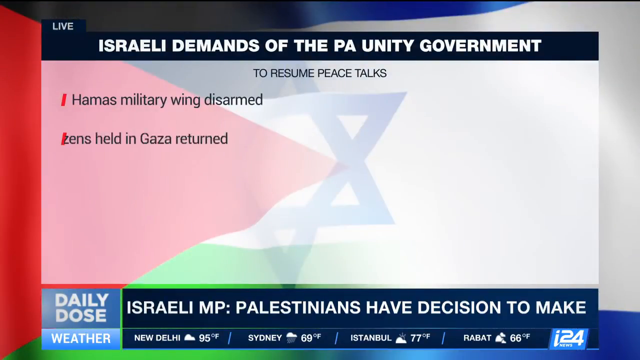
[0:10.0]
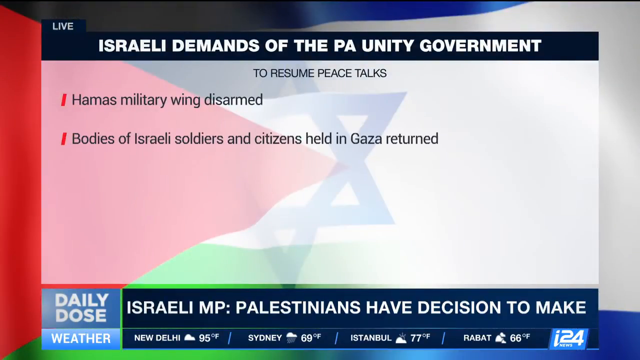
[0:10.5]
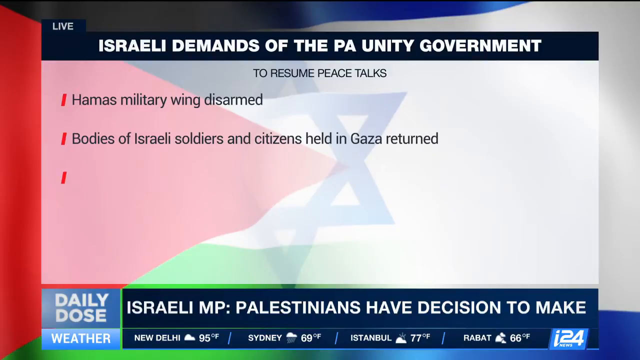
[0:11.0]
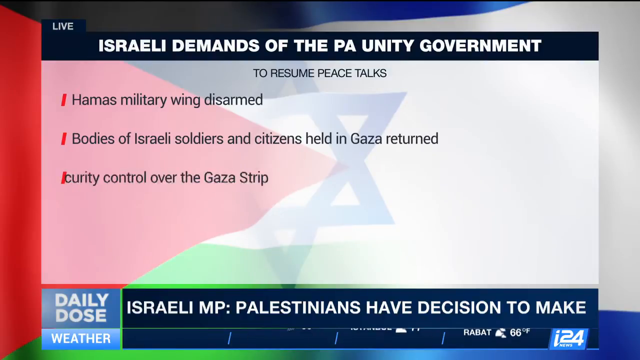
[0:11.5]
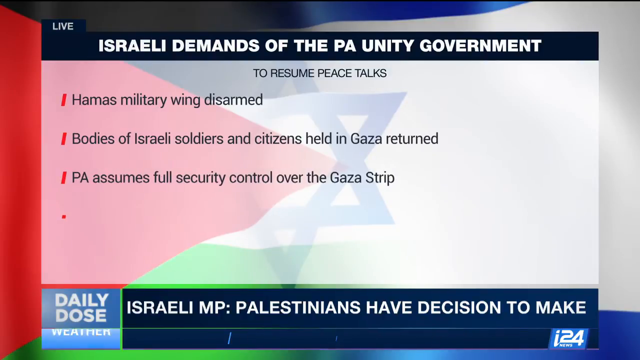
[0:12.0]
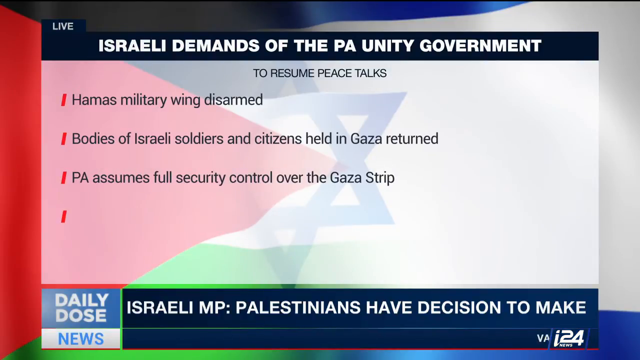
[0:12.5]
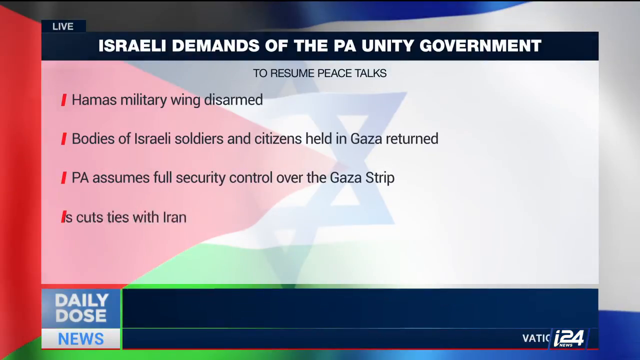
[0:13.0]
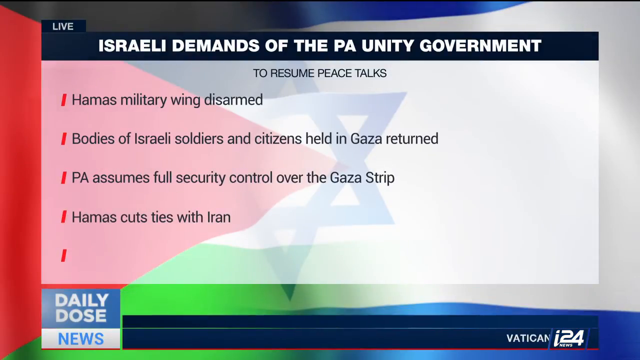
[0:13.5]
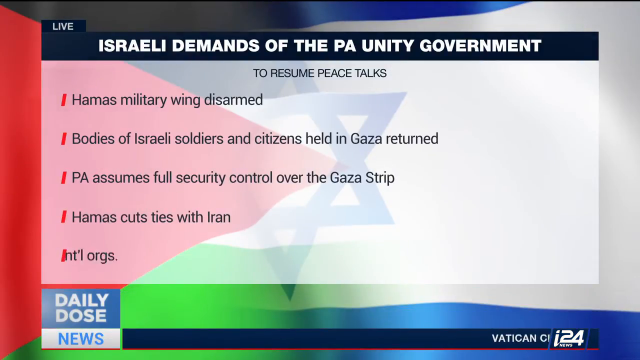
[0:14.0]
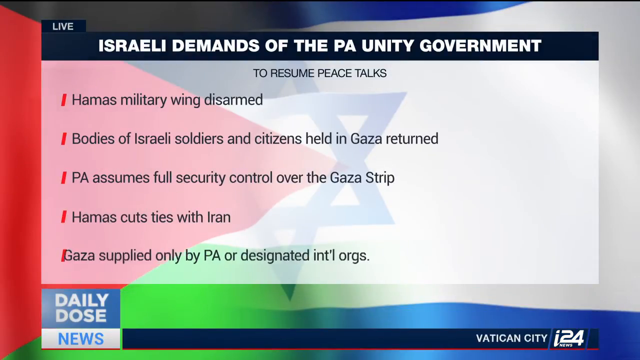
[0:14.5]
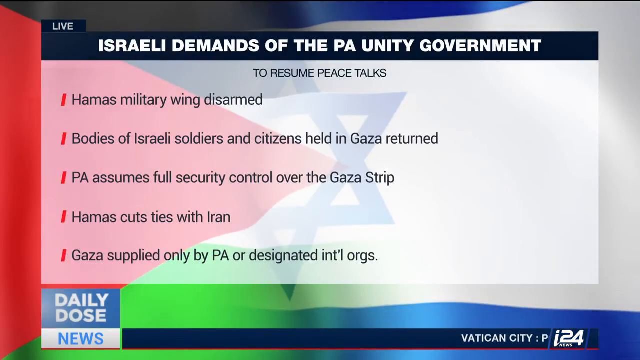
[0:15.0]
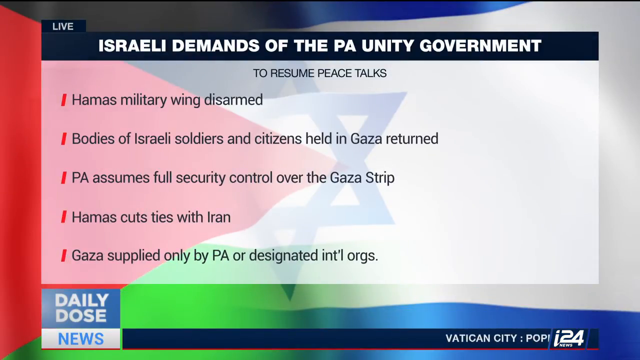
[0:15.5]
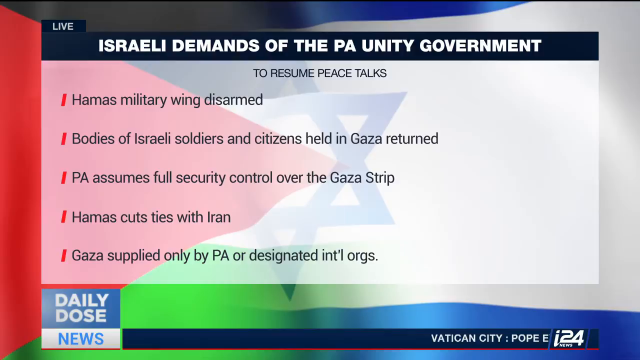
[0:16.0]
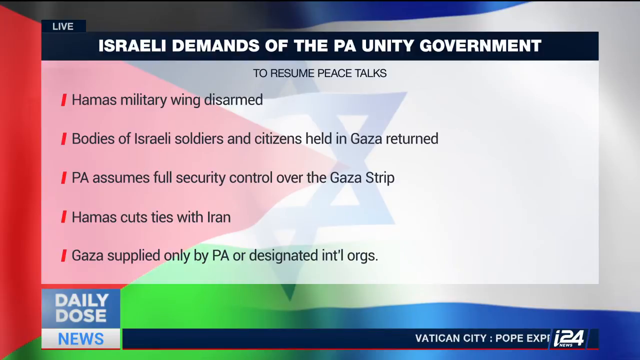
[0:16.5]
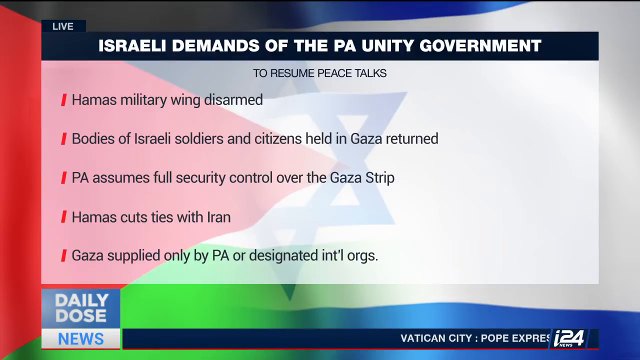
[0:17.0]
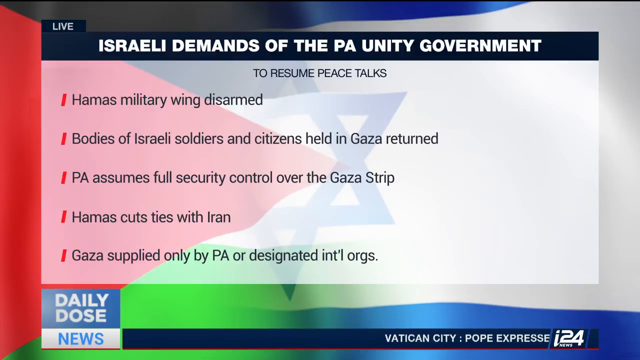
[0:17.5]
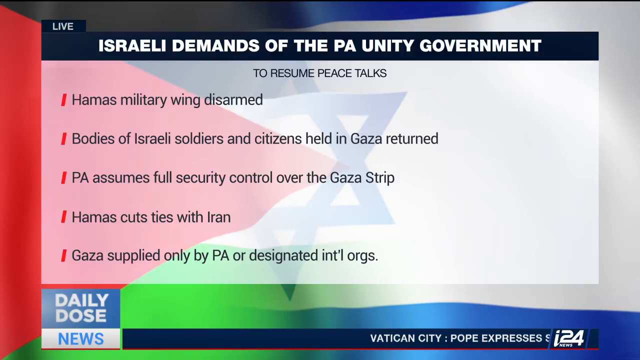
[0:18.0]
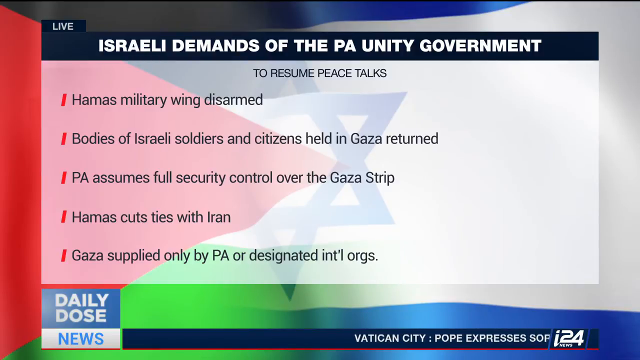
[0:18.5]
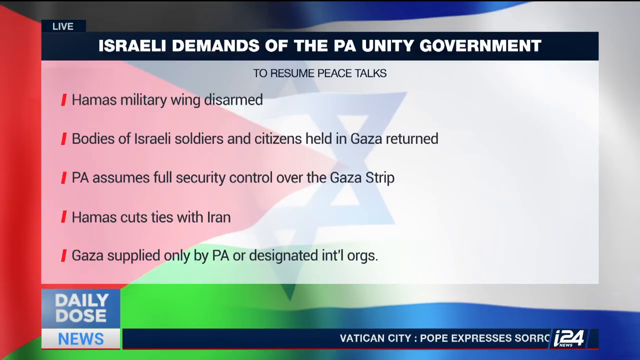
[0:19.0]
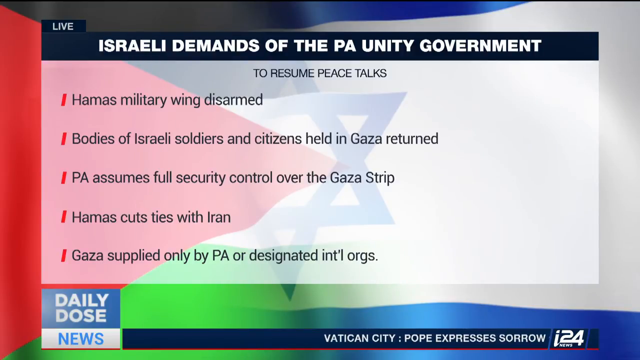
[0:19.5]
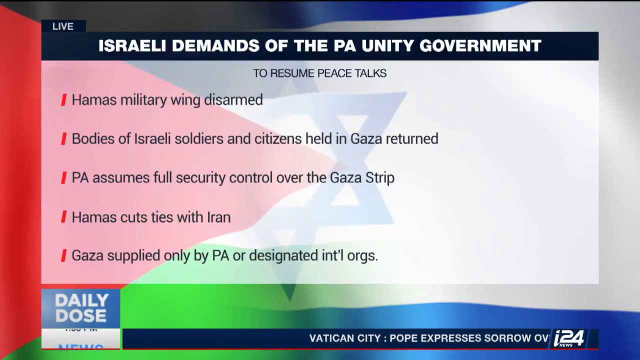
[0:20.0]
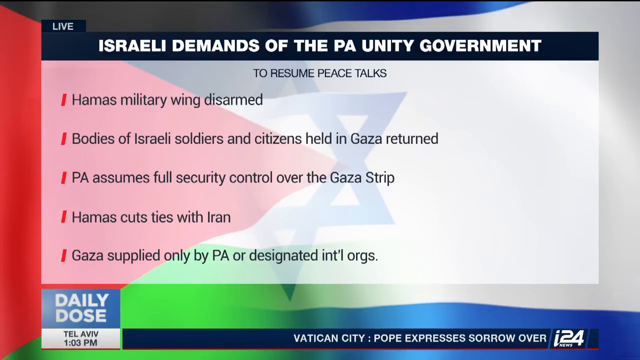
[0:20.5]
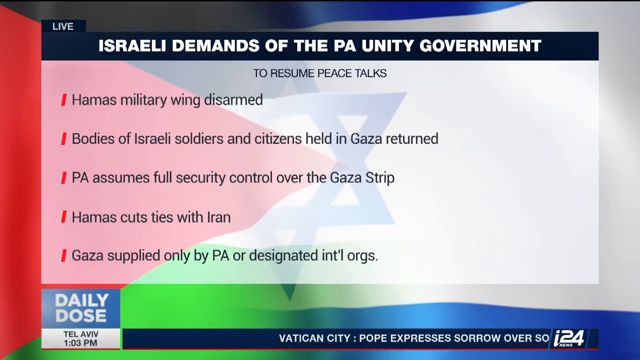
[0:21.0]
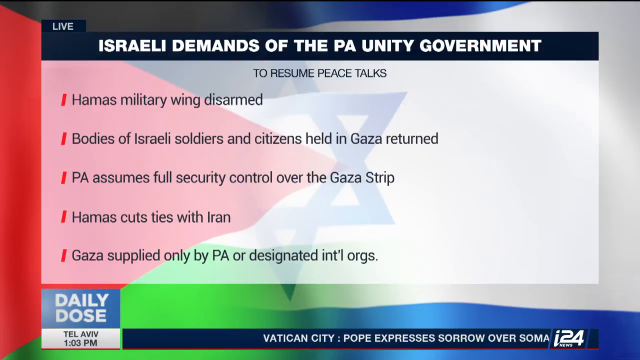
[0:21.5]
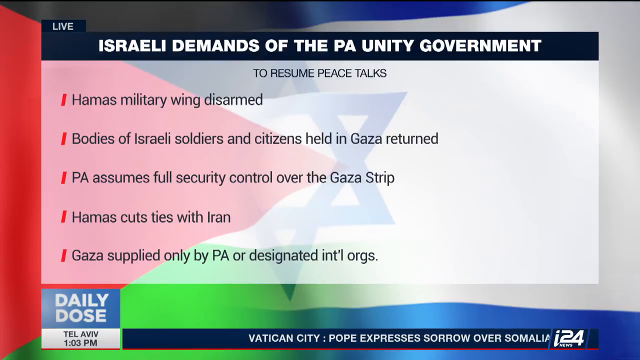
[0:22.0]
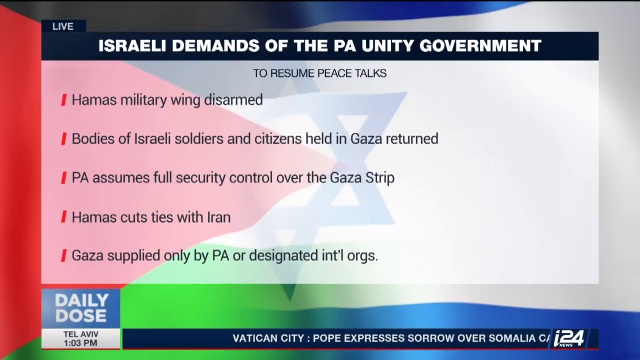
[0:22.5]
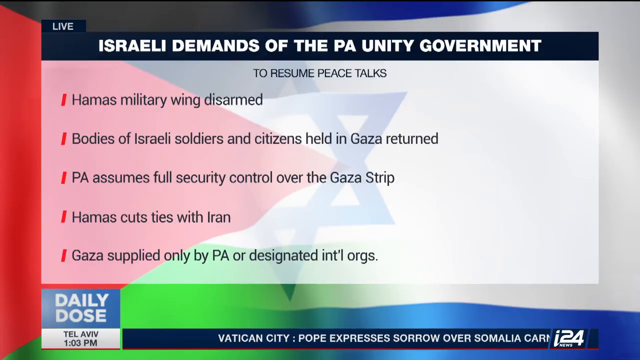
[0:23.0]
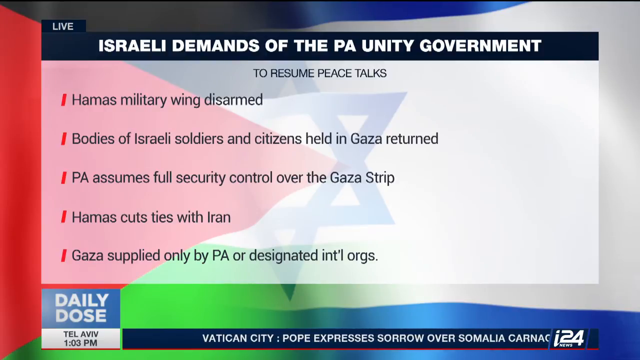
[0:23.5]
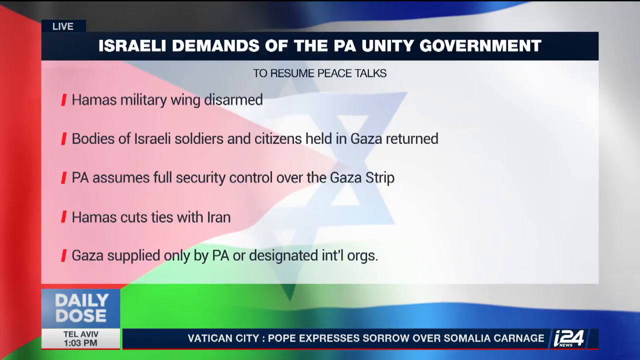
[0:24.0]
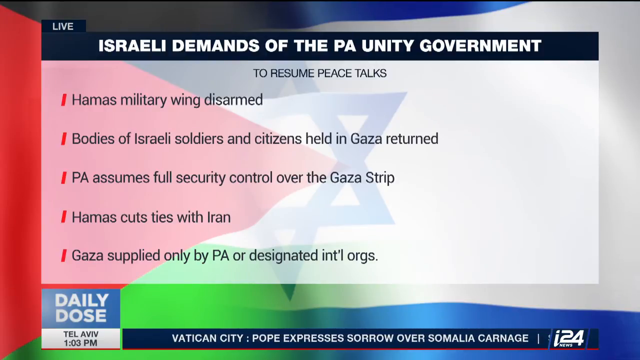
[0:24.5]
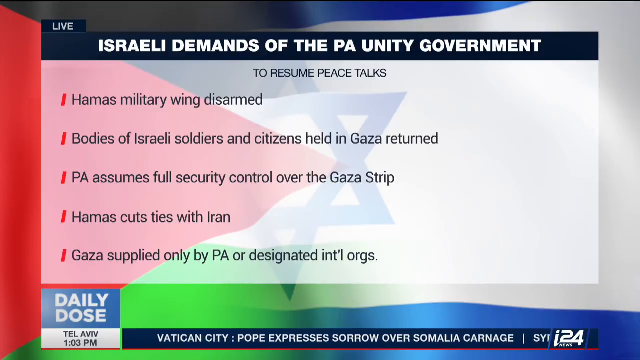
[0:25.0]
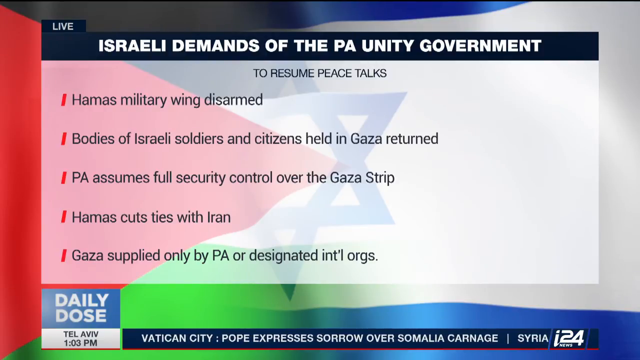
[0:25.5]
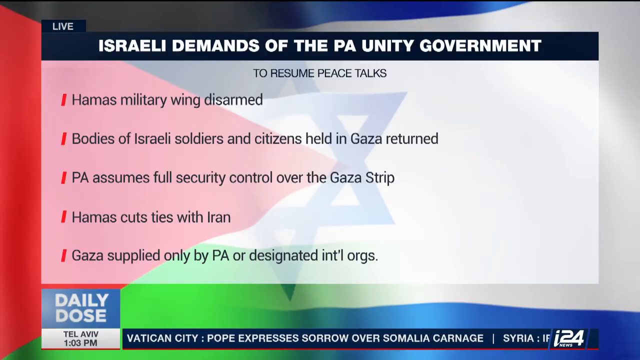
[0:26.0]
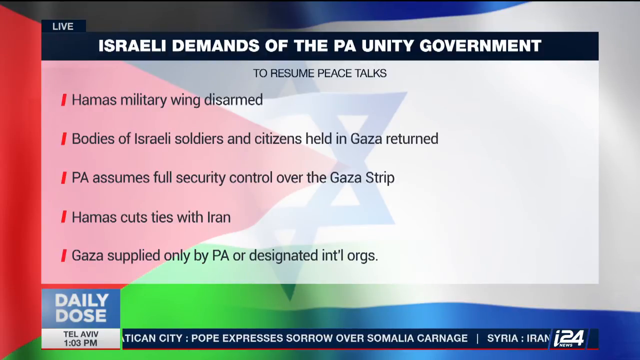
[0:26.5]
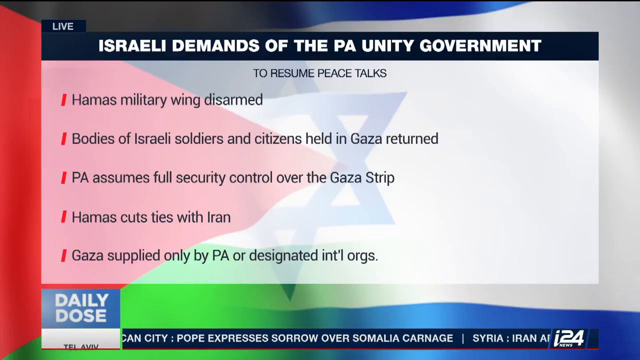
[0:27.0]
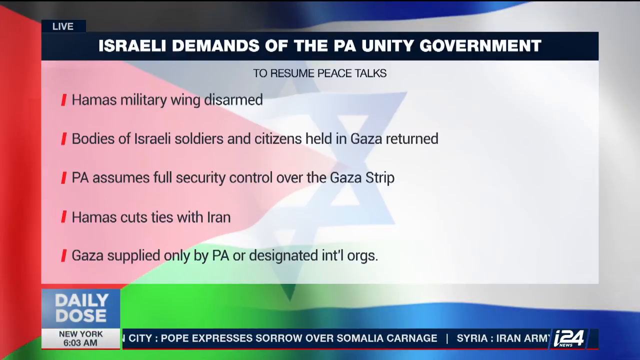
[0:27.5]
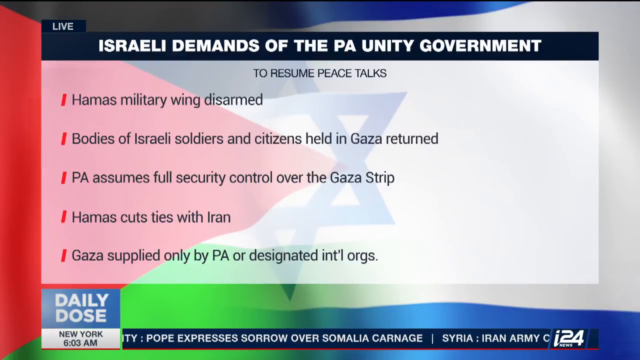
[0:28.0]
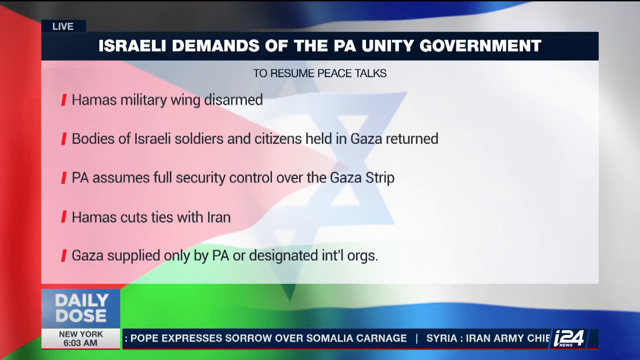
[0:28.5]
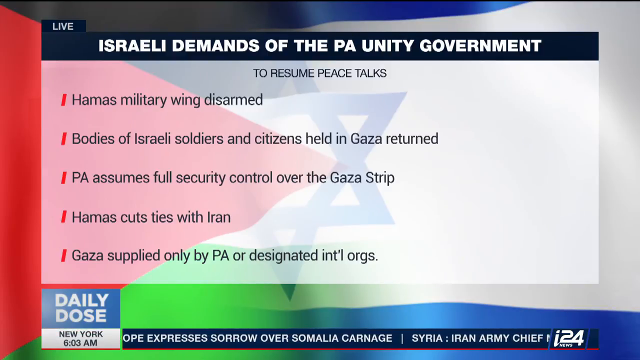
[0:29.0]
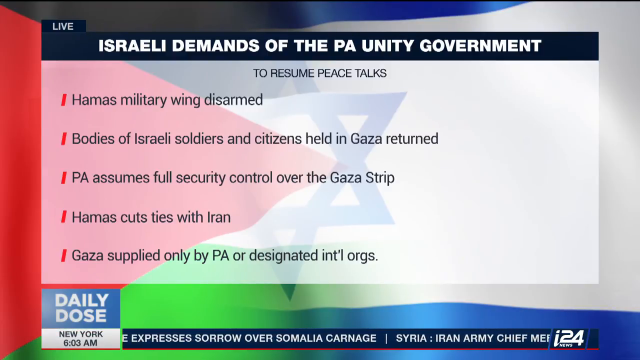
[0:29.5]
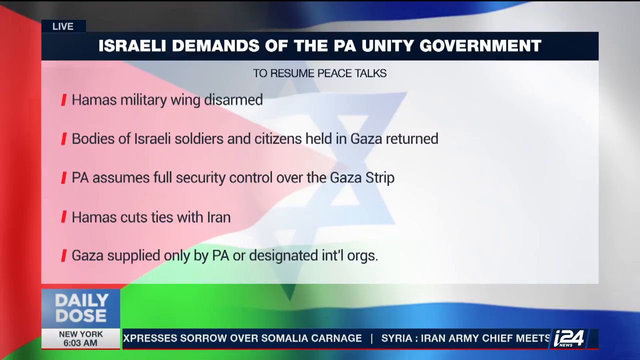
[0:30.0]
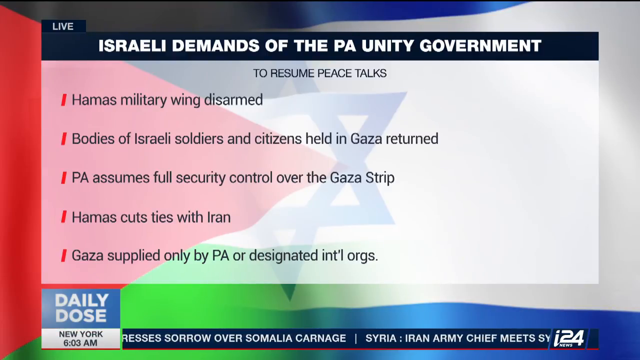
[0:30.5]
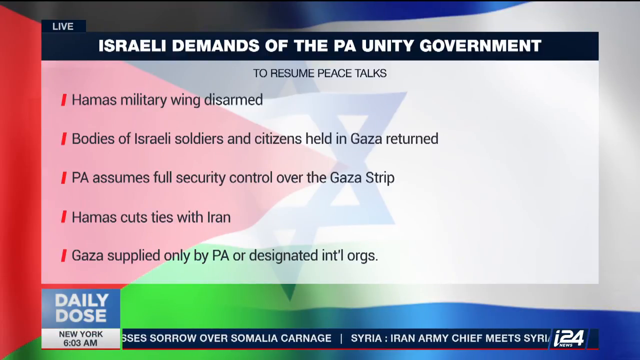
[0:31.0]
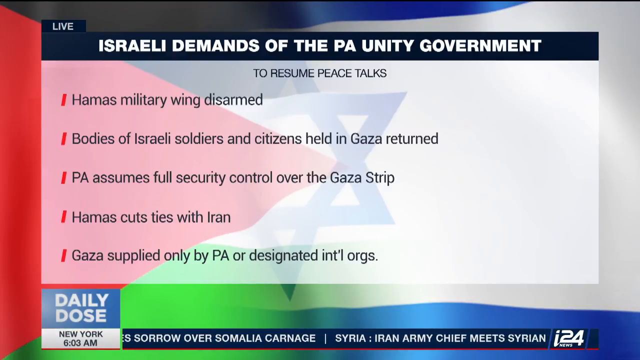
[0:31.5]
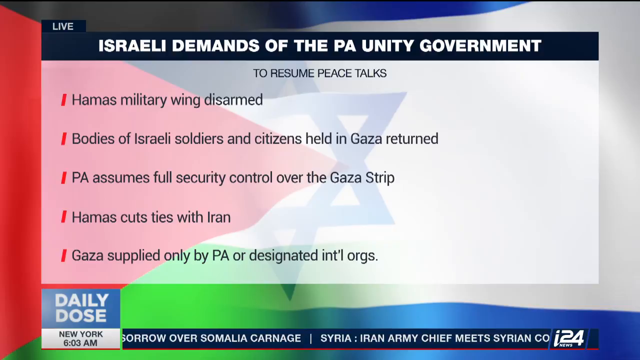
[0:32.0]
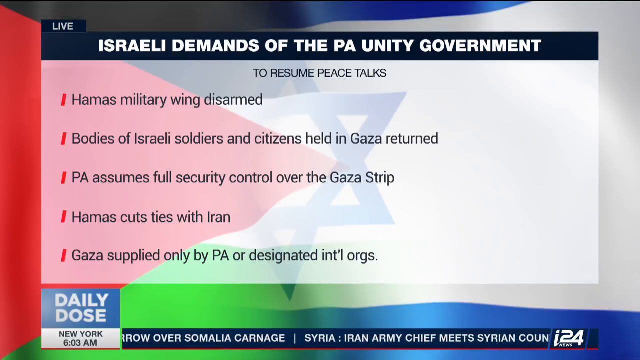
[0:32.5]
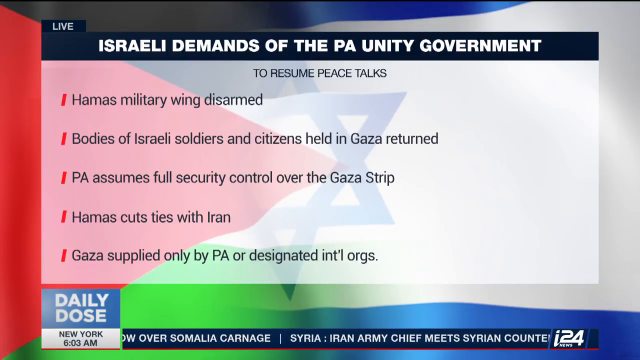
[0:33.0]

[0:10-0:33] A news presenter is talking.